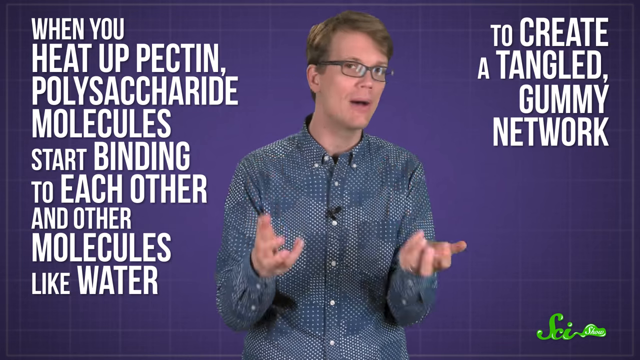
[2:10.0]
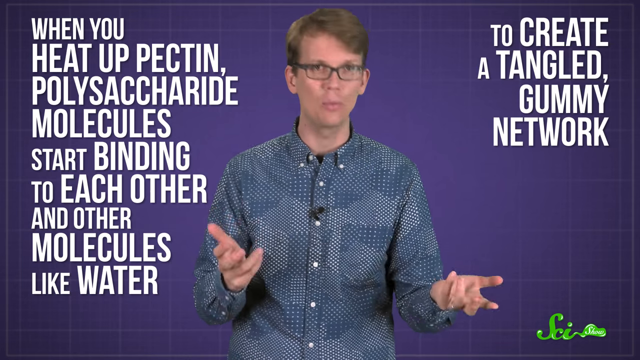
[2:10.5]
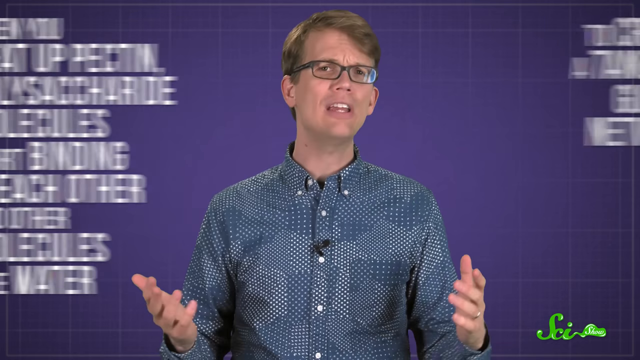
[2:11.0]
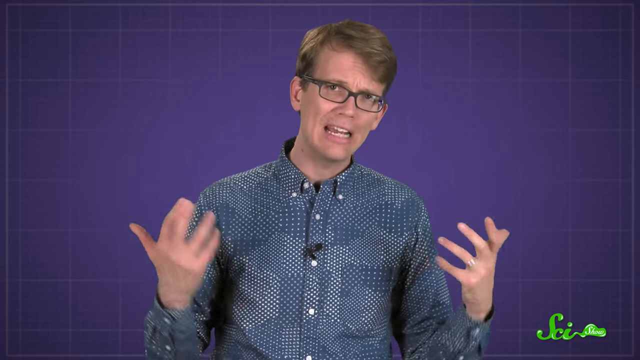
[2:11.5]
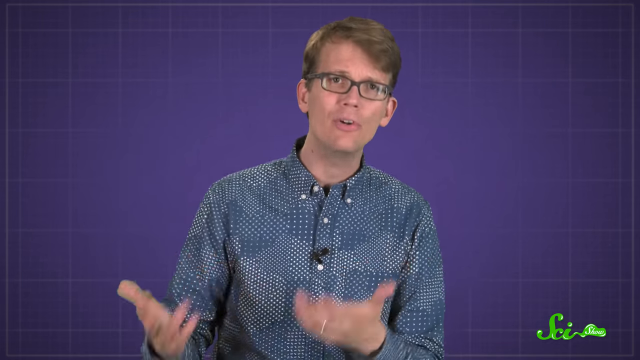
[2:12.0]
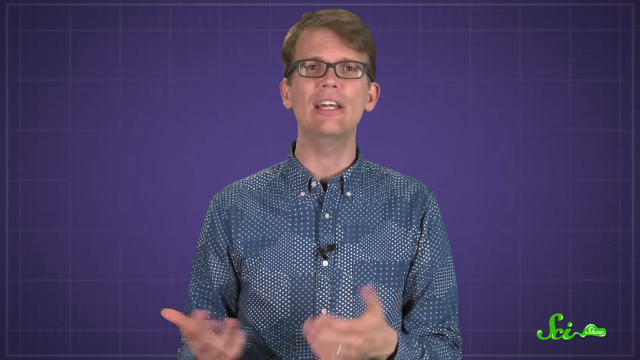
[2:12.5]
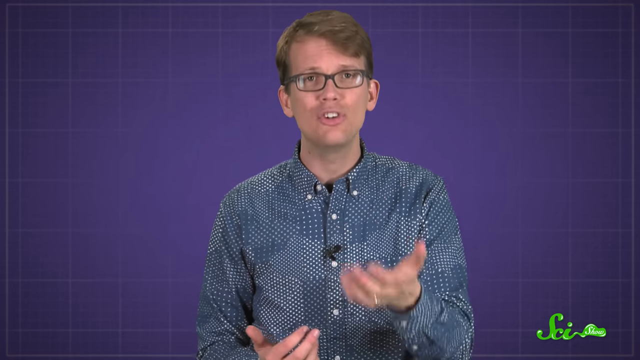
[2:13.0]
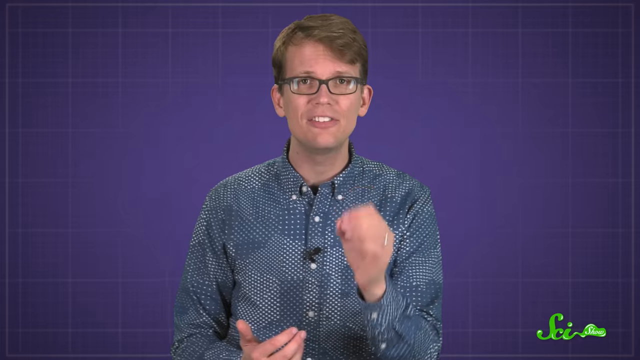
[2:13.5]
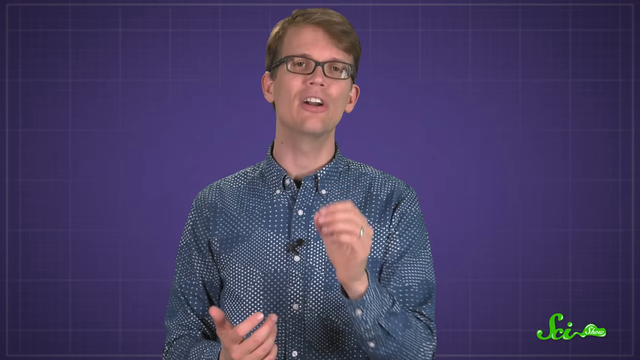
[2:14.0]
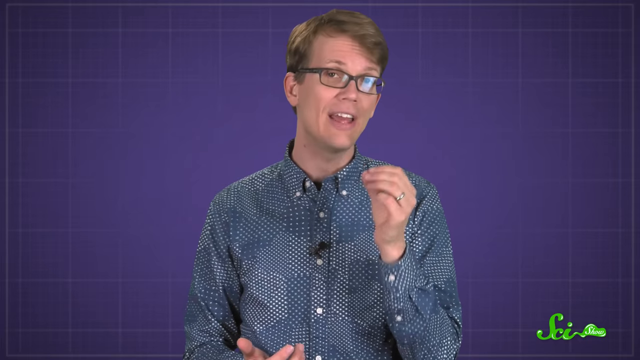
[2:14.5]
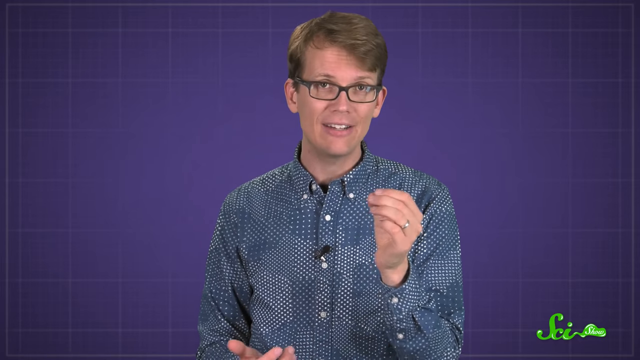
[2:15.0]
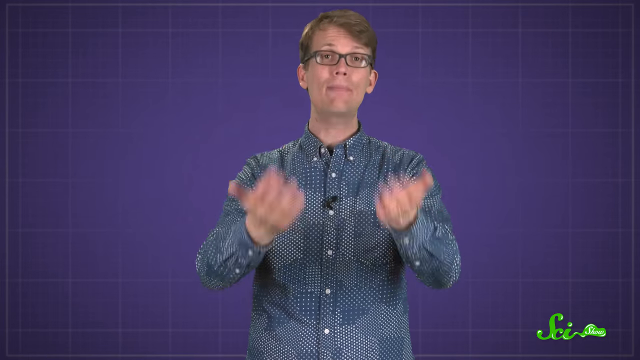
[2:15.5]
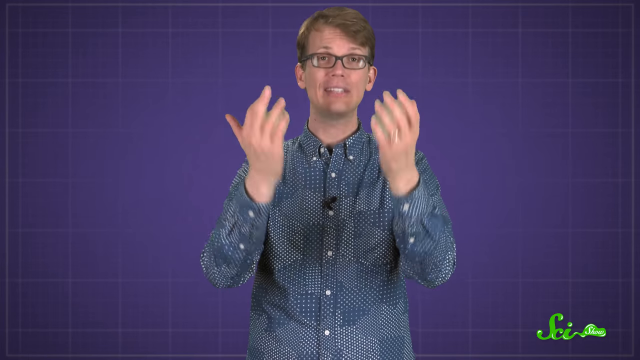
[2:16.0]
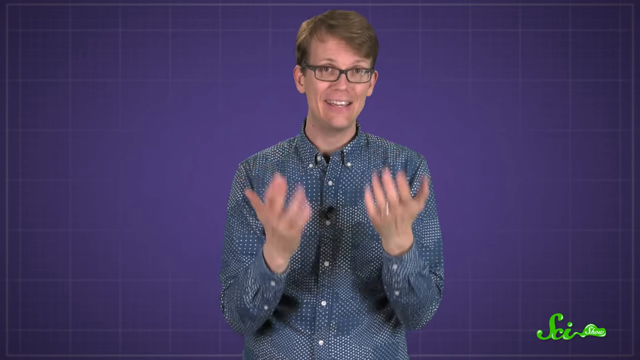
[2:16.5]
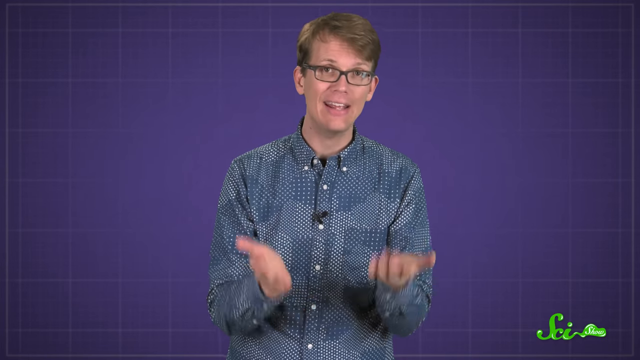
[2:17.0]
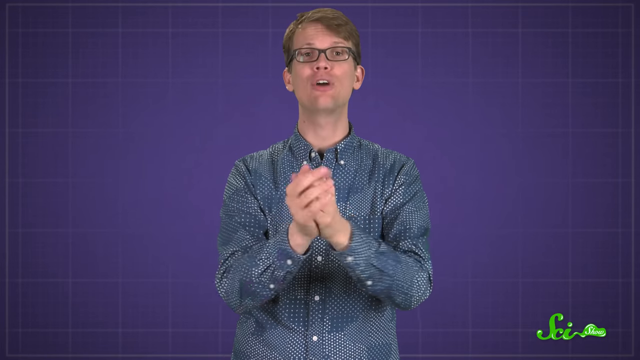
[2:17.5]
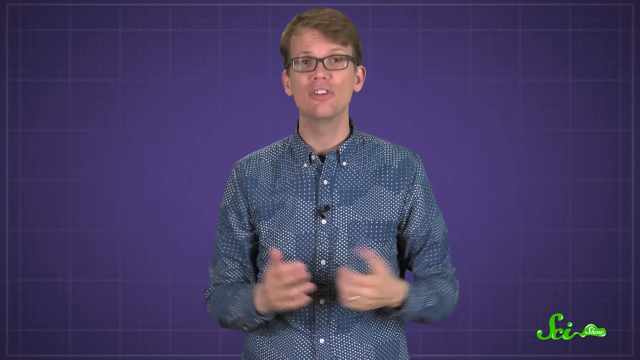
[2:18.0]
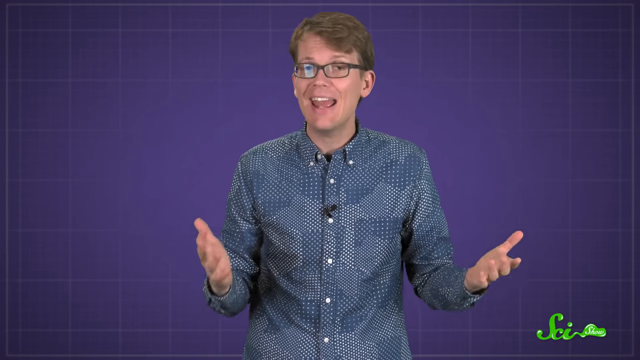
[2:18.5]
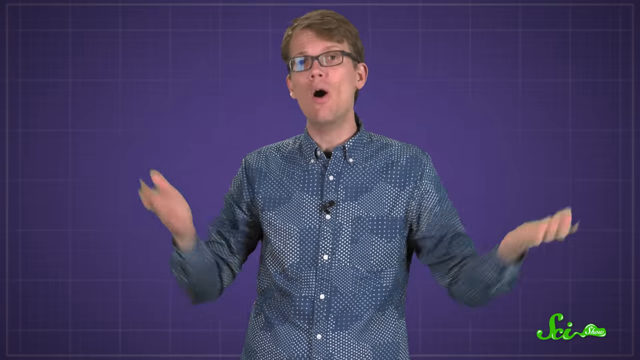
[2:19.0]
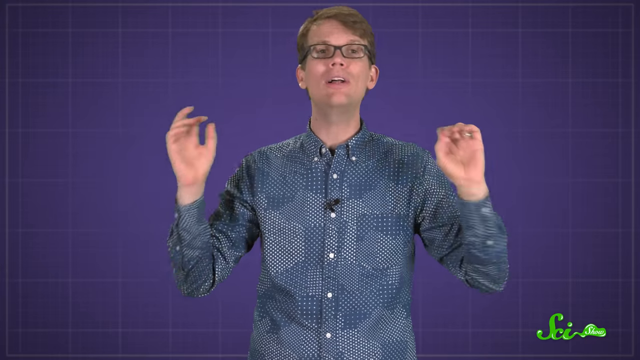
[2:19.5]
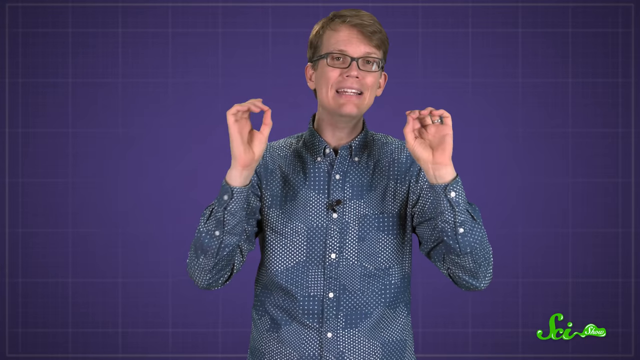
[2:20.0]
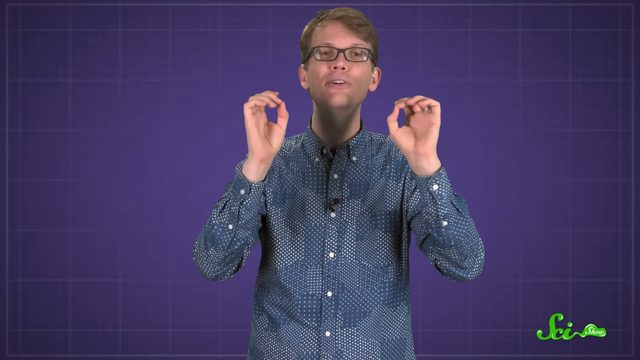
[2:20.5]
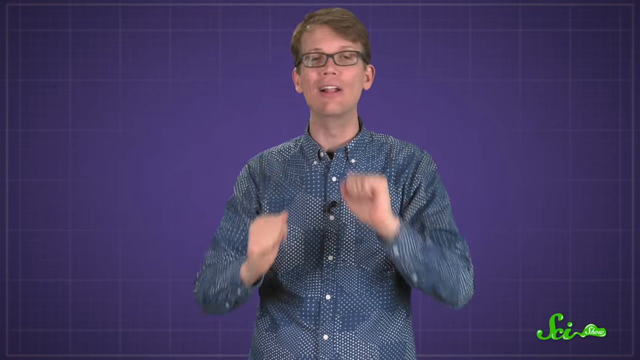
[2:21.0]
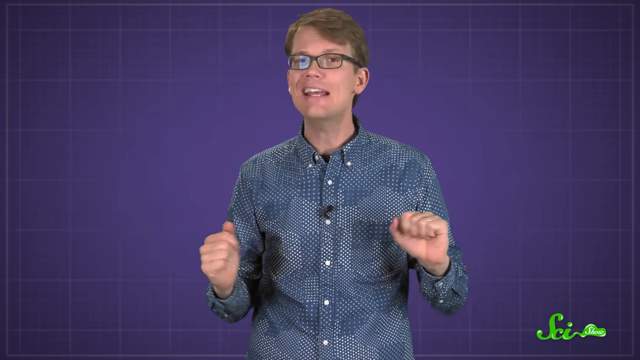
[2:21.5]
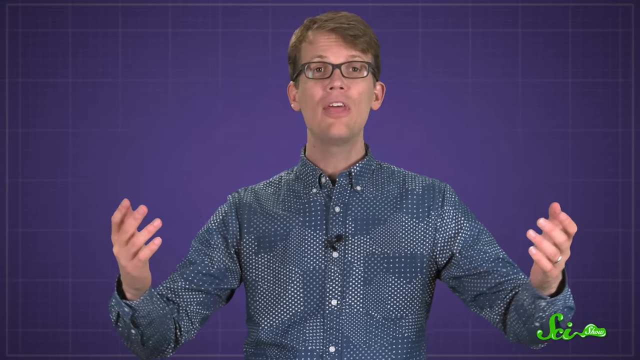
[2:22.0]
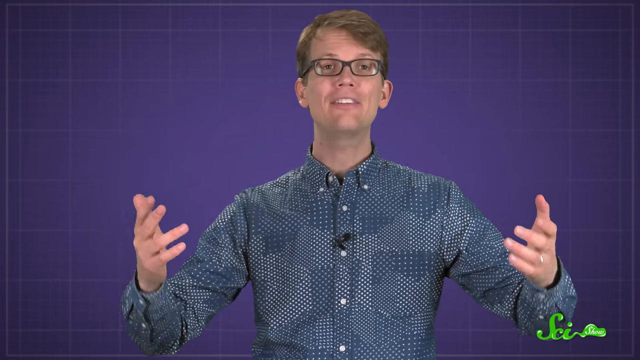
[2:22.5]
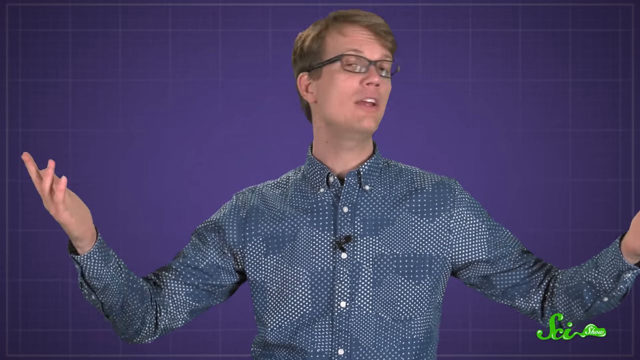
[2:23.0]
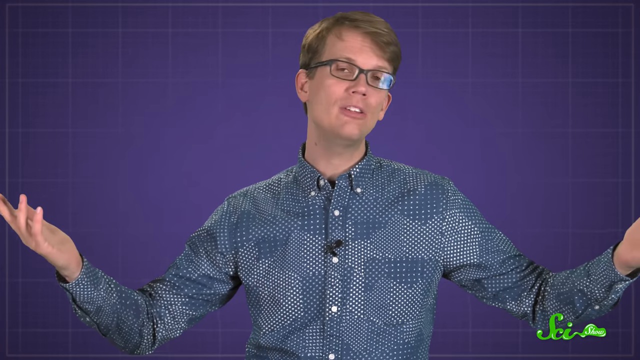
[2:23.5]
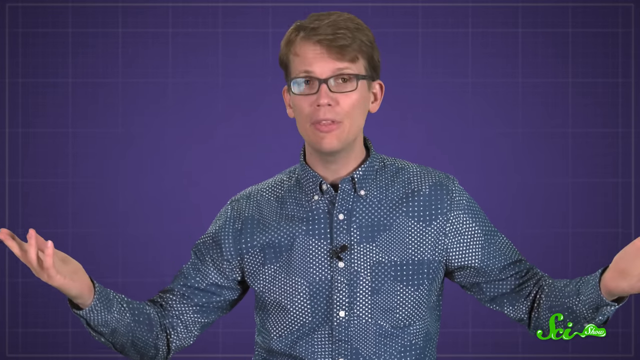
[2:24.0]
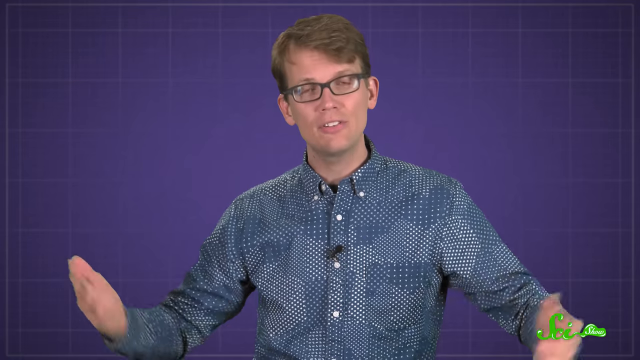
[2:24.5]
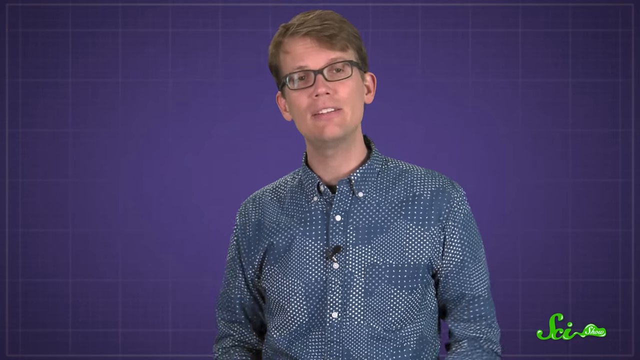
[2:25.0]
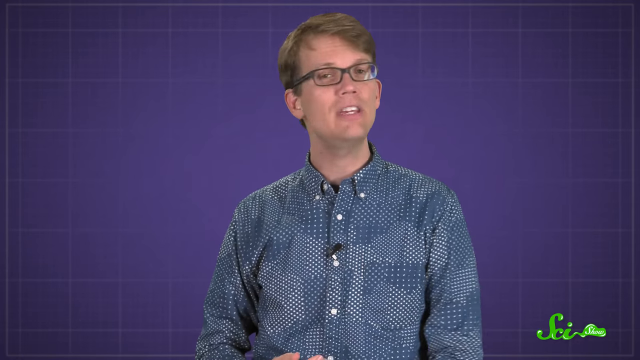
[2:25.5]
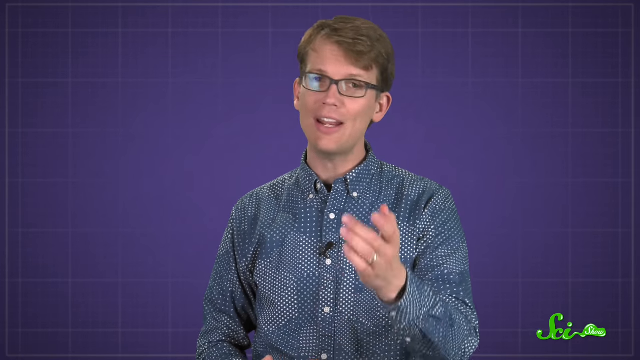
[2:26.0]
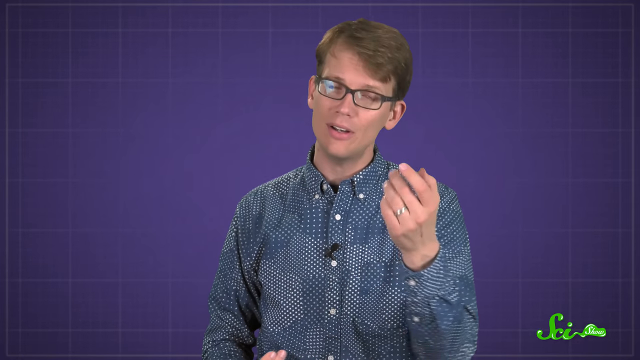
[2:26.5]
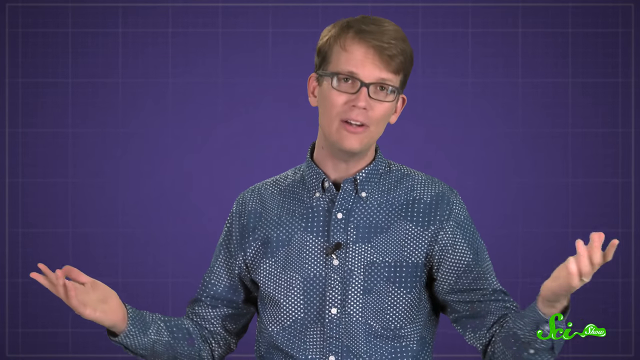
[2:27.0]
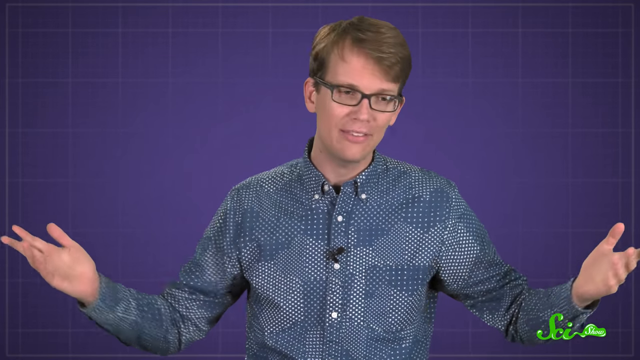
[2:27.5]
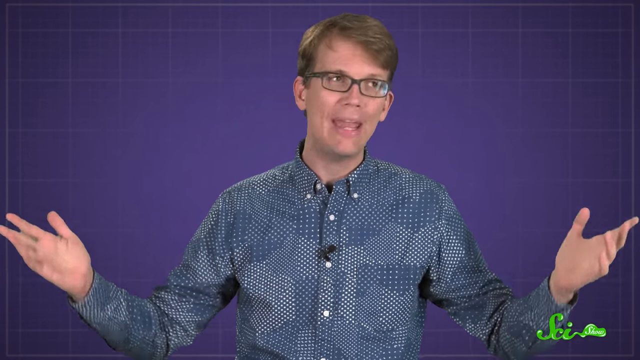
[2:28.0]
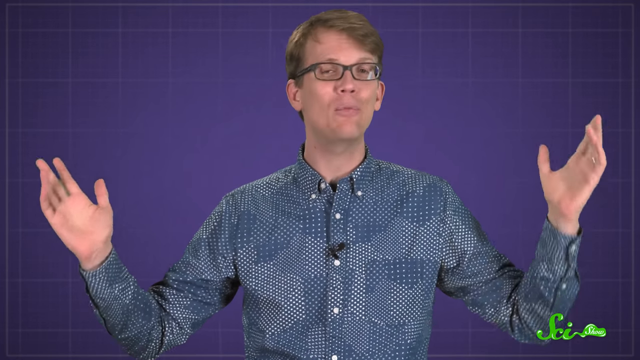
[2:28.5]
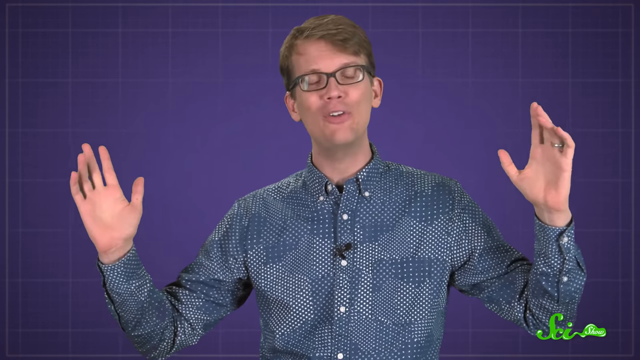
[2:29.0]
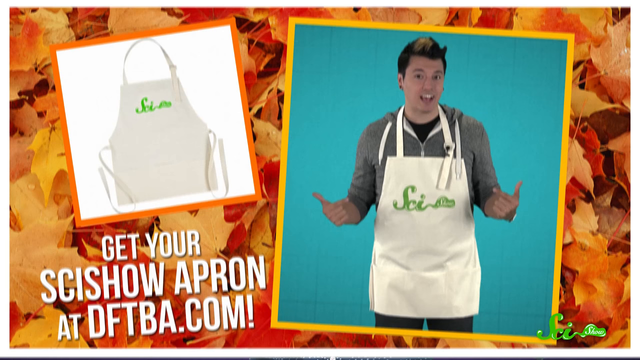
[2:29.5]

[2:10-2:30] The video, apparently about the science of cooking, shows sponsorship by Patrick Stubblefield and a man talking. A slide reads "when you heat up pectin polysaccharide molecules start binding to each other and other molecules like water to create a tangled gummy network." The man talks with his hands, mostly just talking. An apron is then shown, with text that appears to say "get your SciShow apron at the tetra.com"; it is hard to read because a black border covers the bottom when paused.